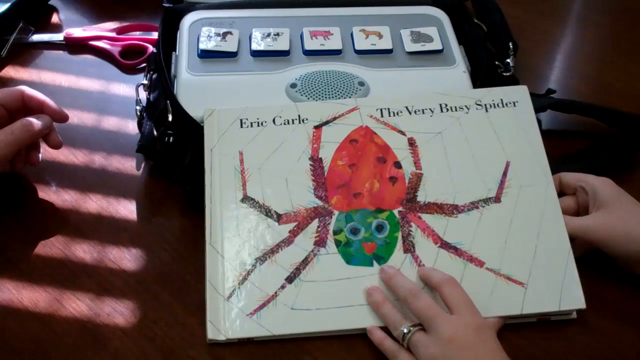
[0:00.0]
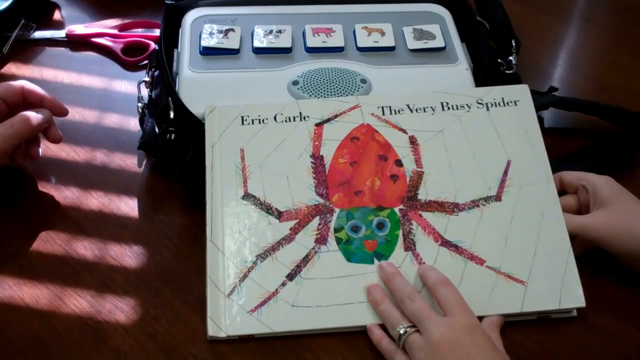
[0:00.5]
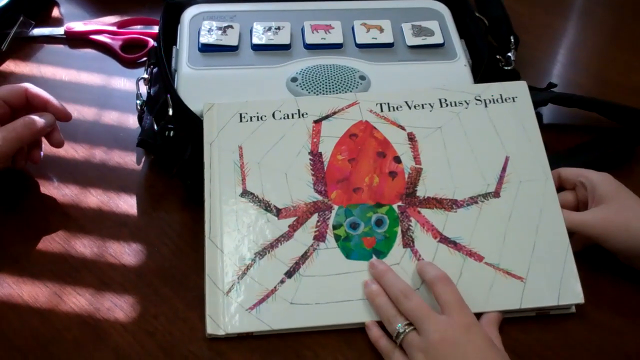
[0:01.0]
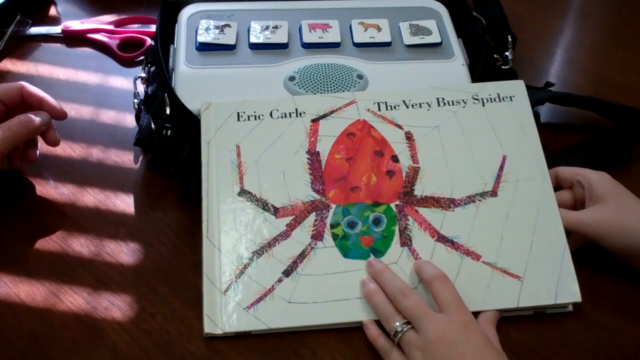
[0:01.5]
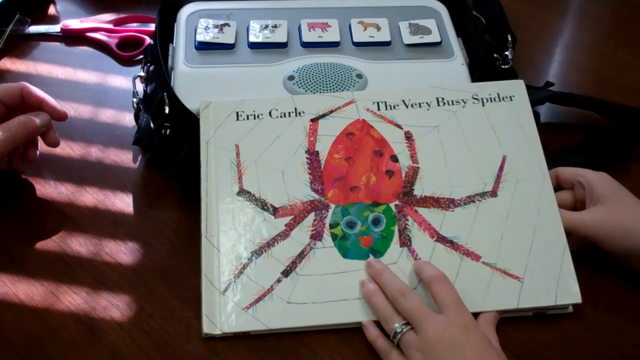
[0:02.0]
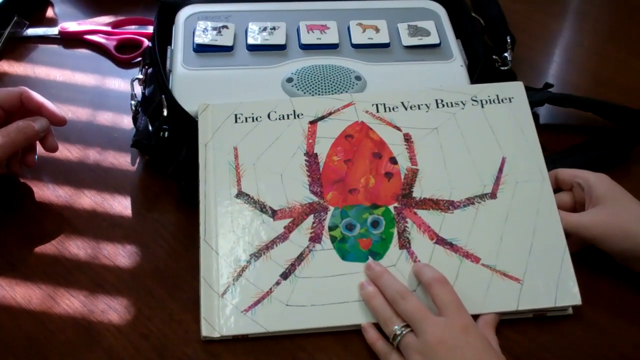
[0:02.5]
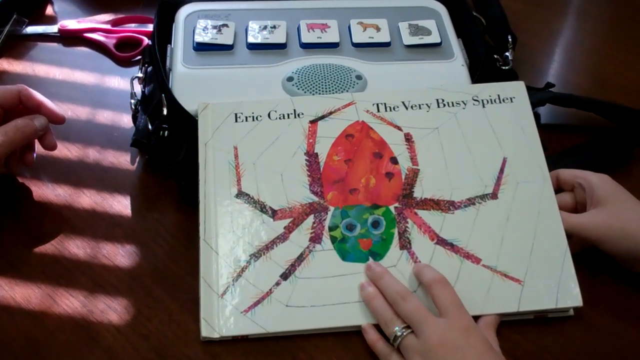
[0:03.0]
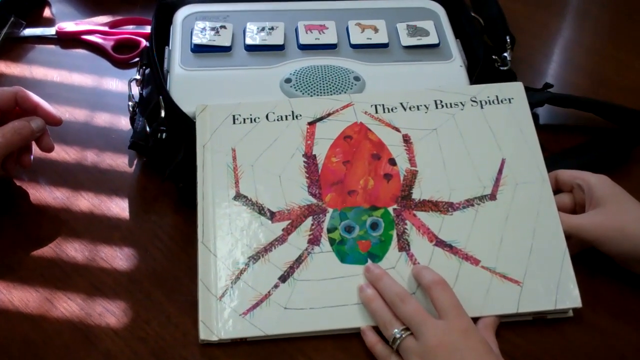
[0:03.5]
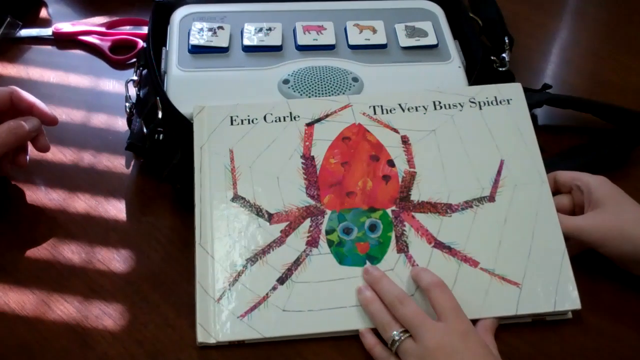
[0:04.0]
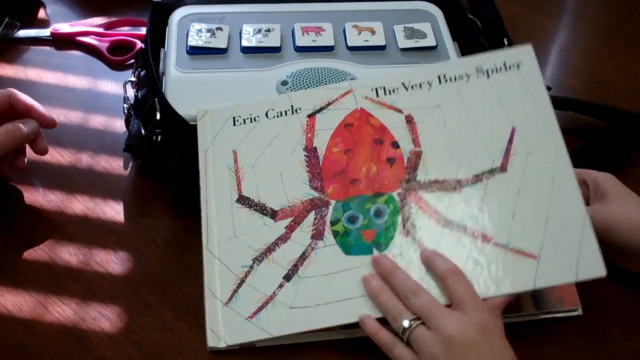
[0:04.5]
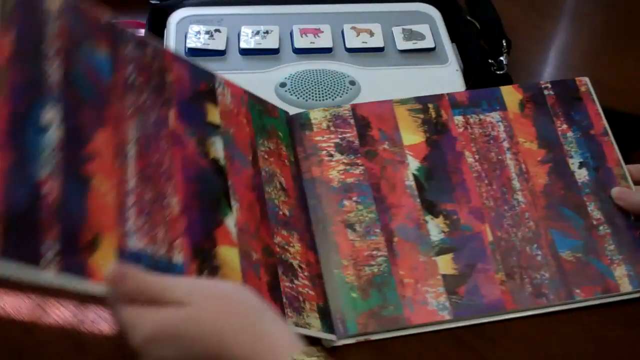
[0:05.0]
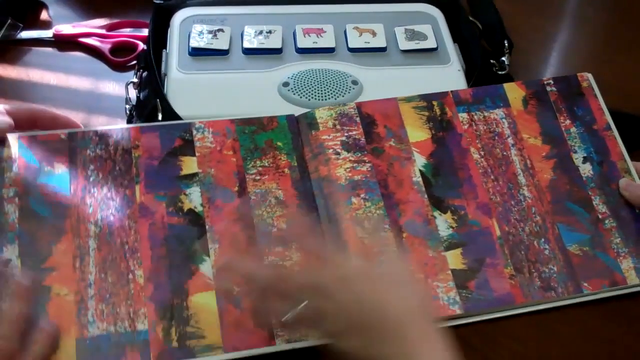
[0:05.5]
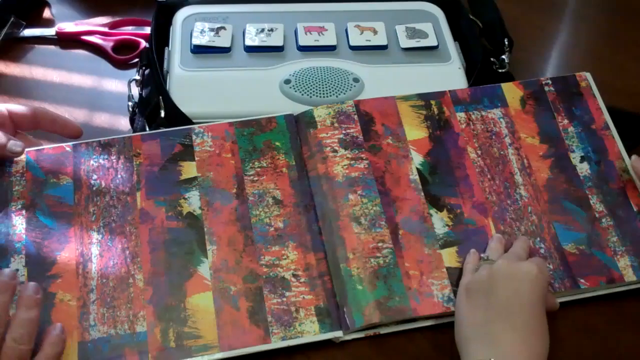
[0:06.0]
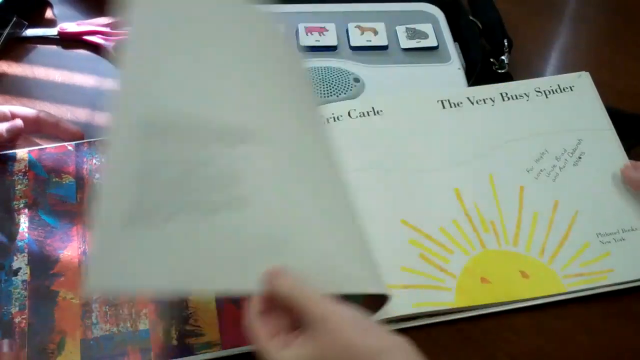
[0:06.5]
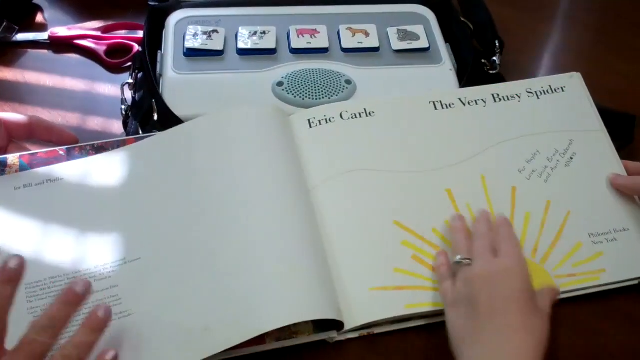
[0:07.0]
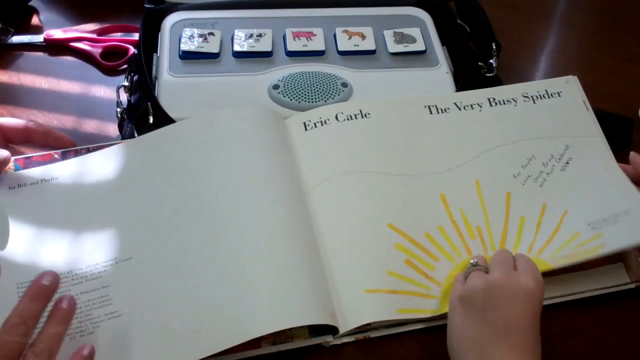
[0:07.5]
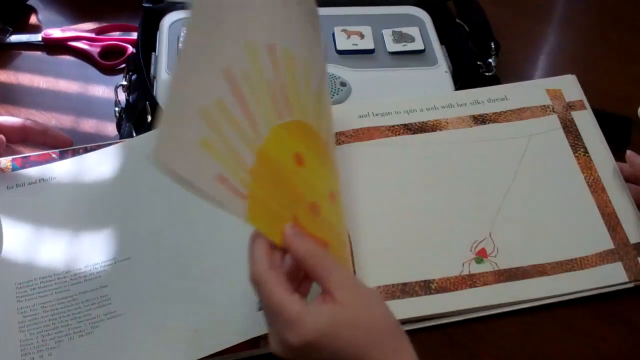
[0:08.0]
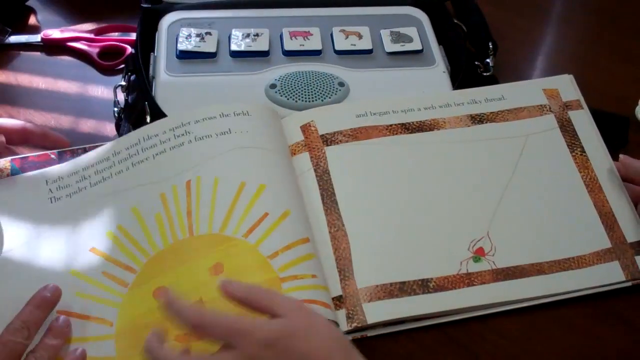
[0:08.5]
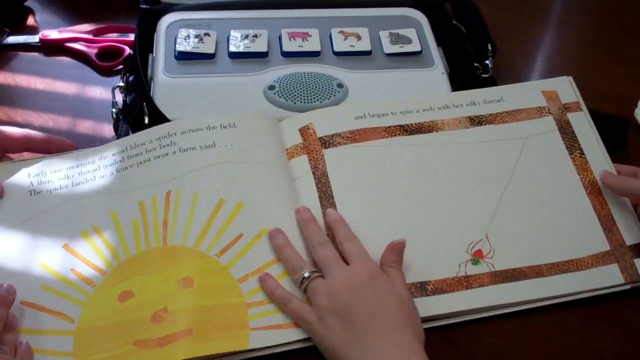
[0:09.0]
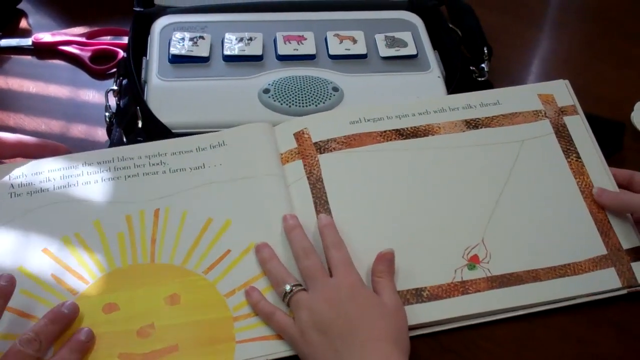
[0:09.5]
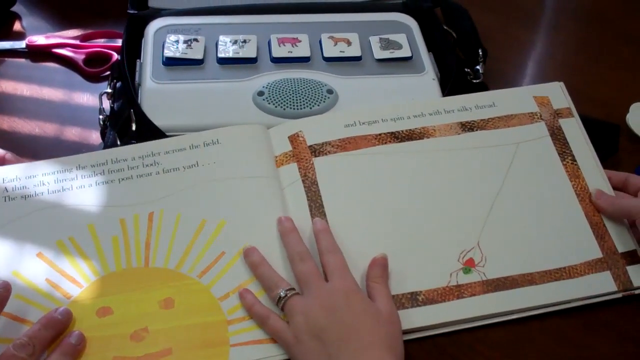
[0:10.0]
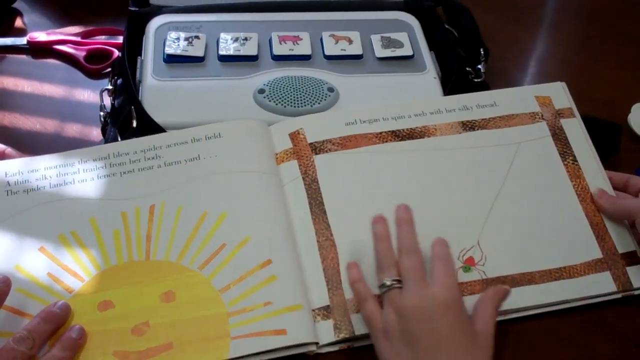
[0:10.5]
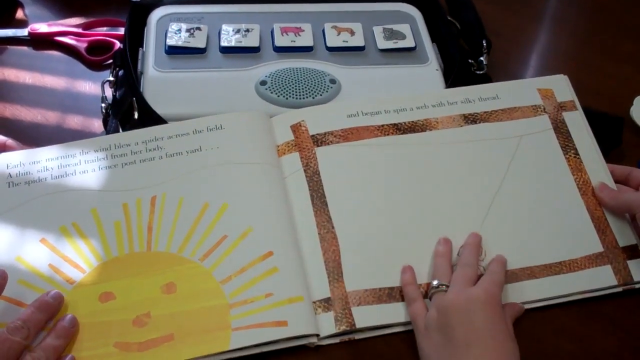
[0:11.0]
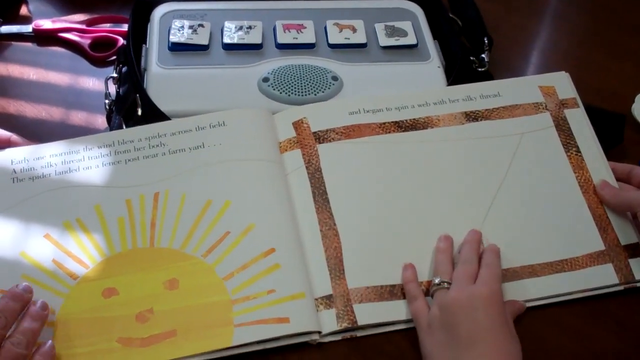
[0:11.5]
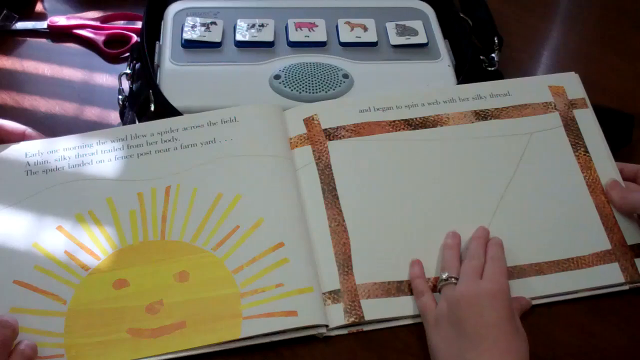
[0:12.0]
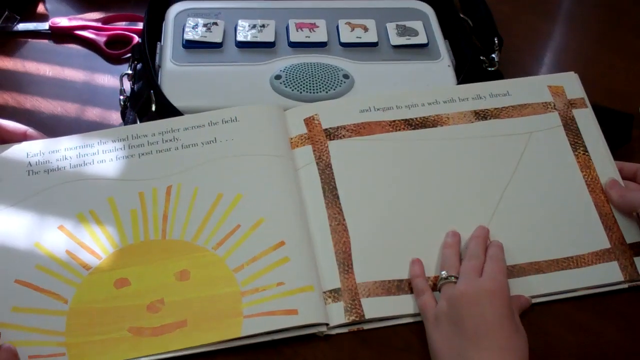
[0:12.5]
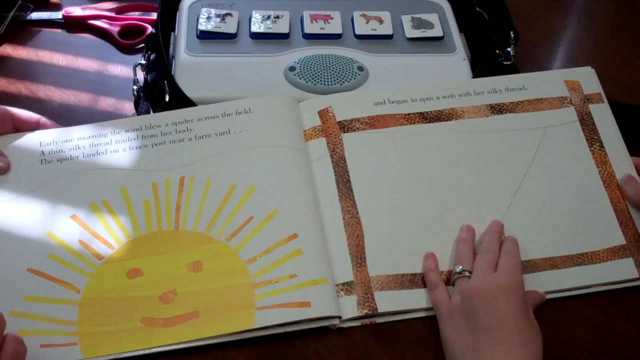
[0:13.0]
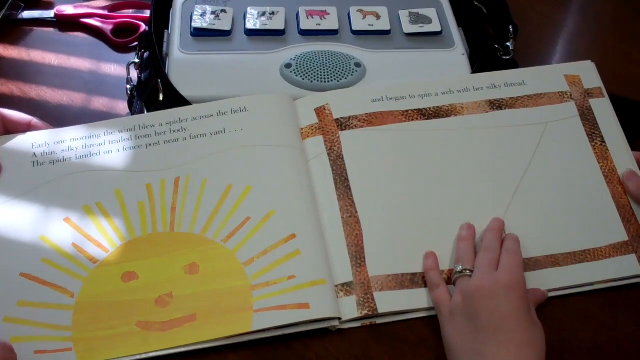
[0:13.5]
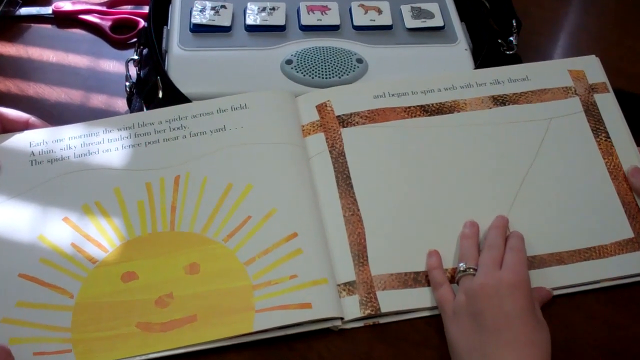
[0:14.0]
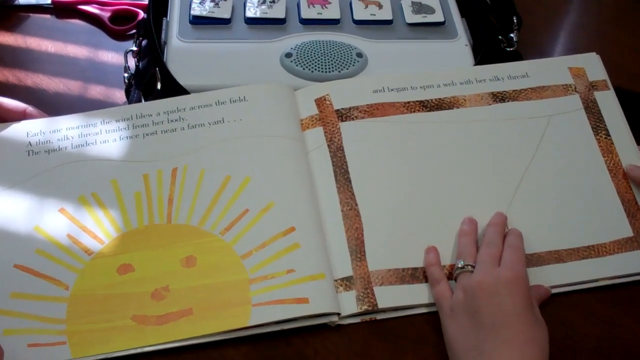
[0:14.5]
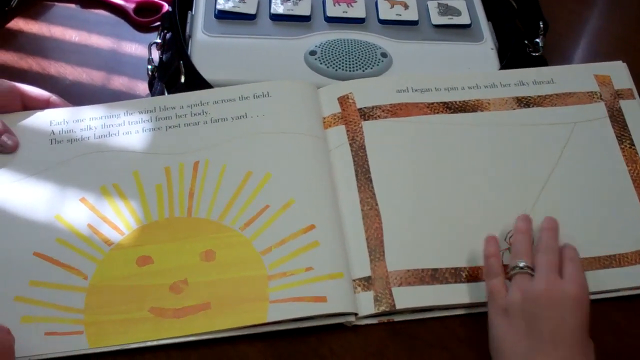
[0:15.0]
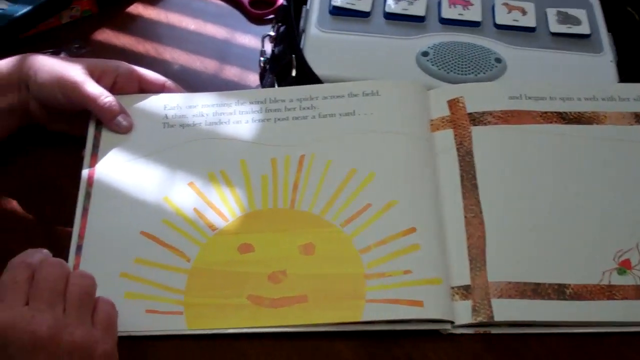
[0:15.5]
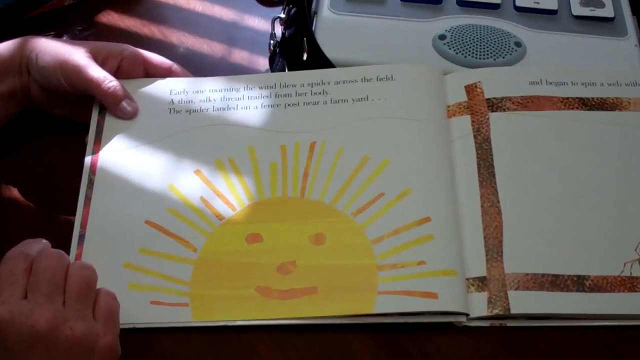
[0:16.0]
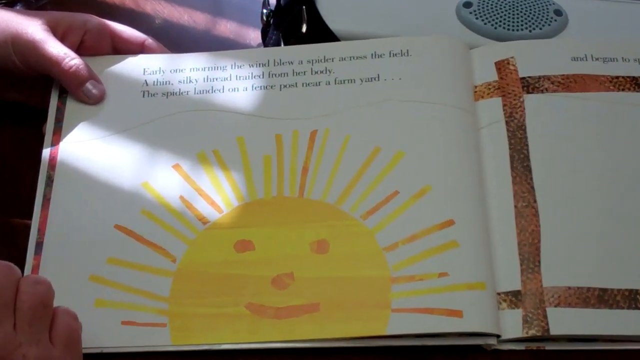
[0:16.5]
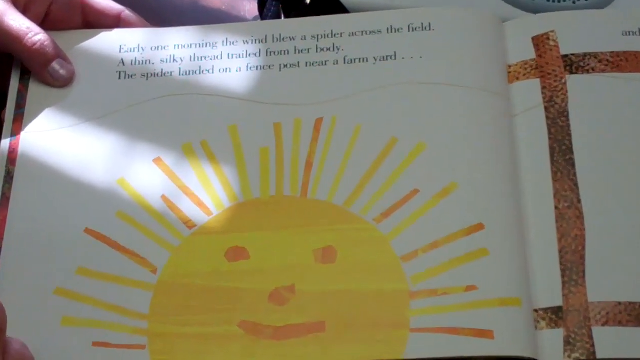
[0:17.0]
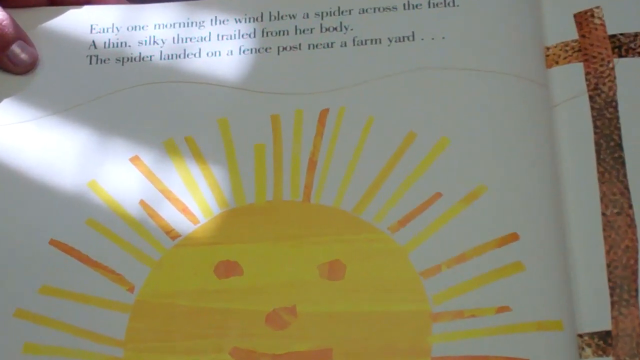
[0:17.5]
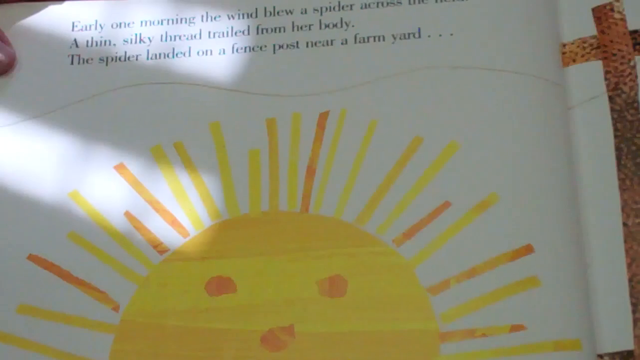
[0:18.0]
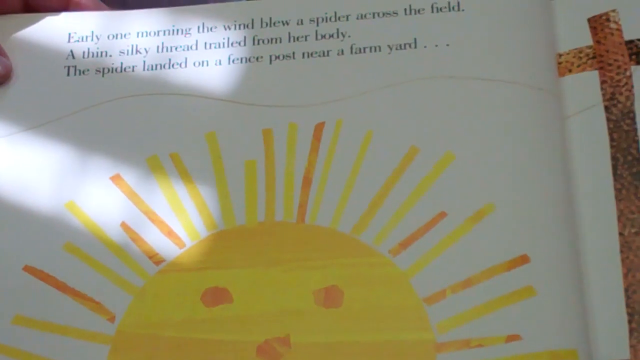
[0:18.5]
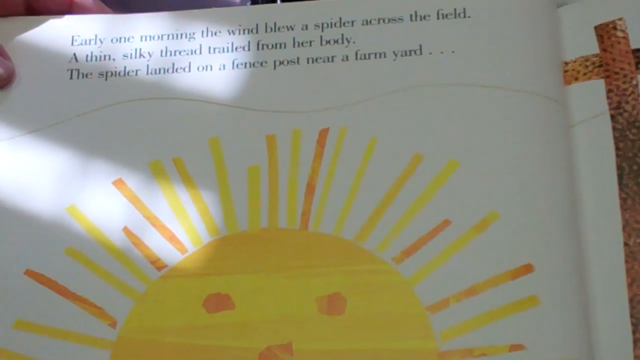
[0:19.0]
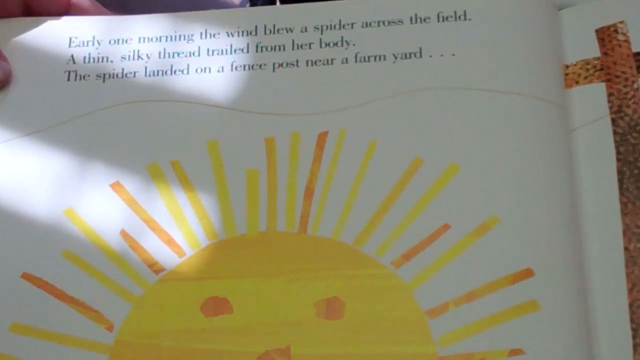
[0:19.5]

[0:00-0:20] The video opens on the cover of Eric Carle's book The Very Busy Spider. A woman's left hand is on the front of the cover and her right hand is next to it. To the left of the screen, another left hand is visible, belonging to someone else who is sitting there, and above that is a pair of pink-handled scissors. Above the book is a computer top with five animal pictures across the top: a horse, a cow, a pig, a dog and a cat. The woman opens the book to the front page, done in Eric Carle's collage style, showing tree trunks in various shades of red, green, brown and black. She opens to the title page, which says "Eric Carle, The Very Busy Spider"; at the bottom of that page is a picture of half of a sun, and the book has been inscribed in handwriting. With her left hand, on which she wears a wedding band and a diamond ring, the woman opens to the first page. The two pages are shown side by side, then the camera zooms in to the left-hand page, which says "Early one morning, the wind blew a spider across the yard. A thin, silky thread trailed from her body. The spider landed on a fence post near a farmyard." The second page has a picture of a brown square and says "And began to spin a web with her silky thread."